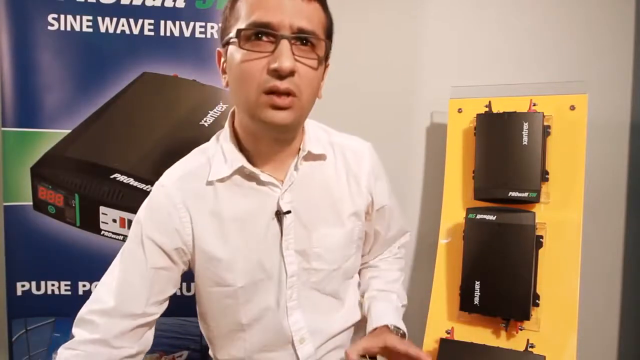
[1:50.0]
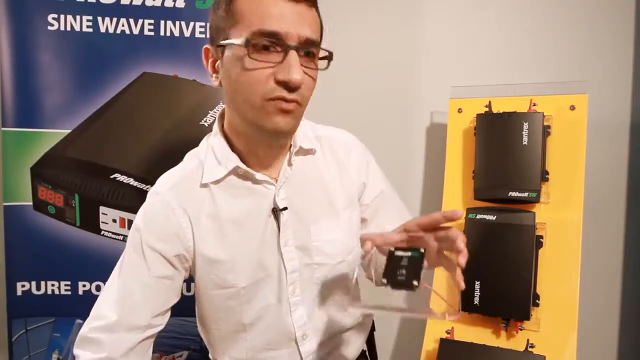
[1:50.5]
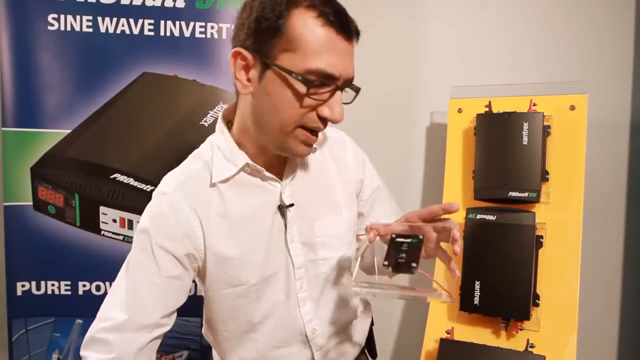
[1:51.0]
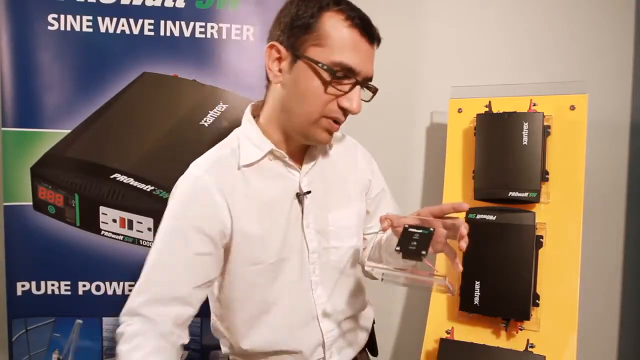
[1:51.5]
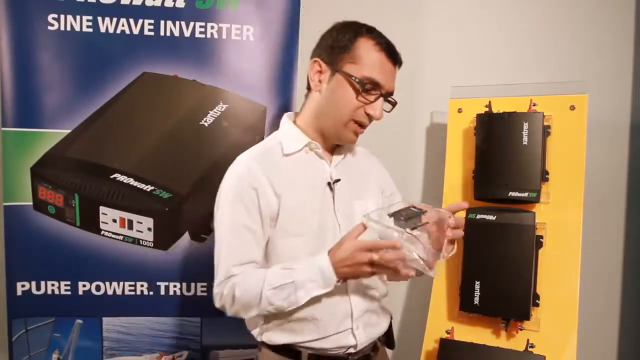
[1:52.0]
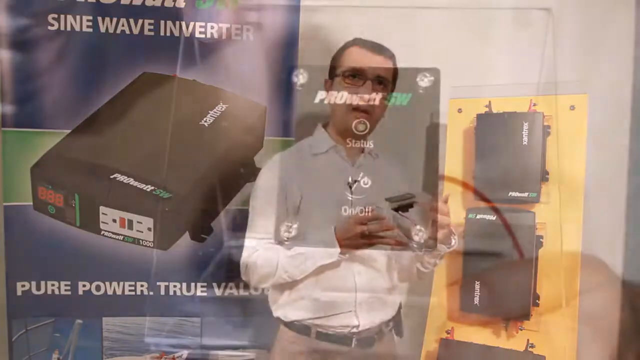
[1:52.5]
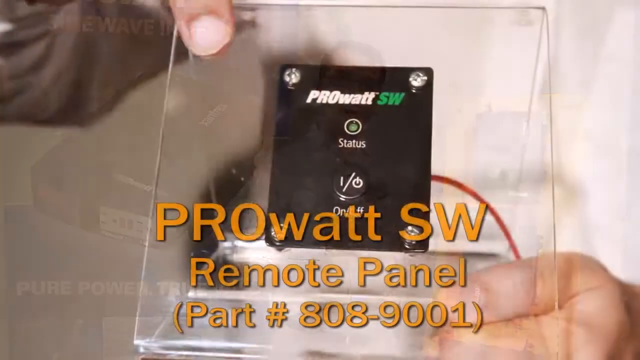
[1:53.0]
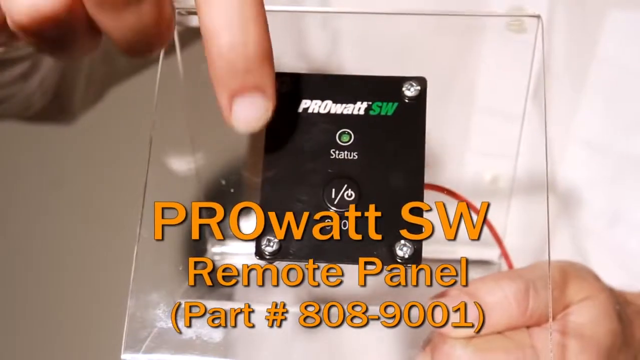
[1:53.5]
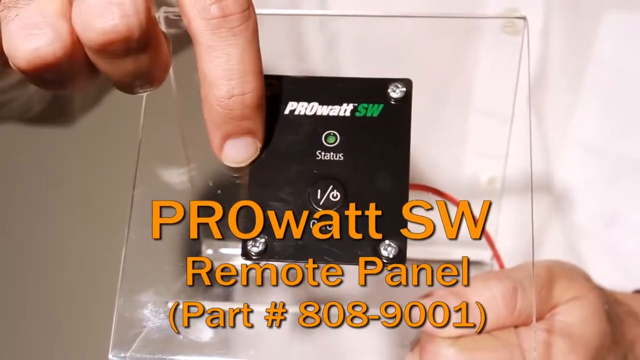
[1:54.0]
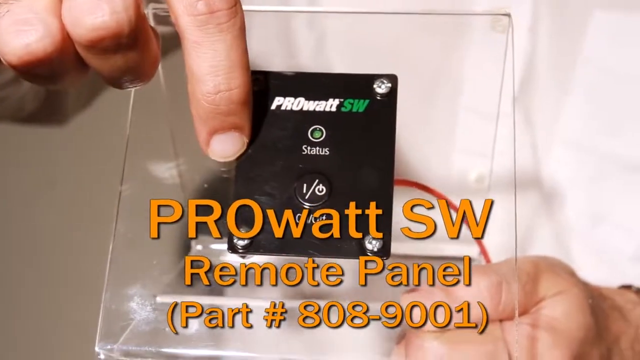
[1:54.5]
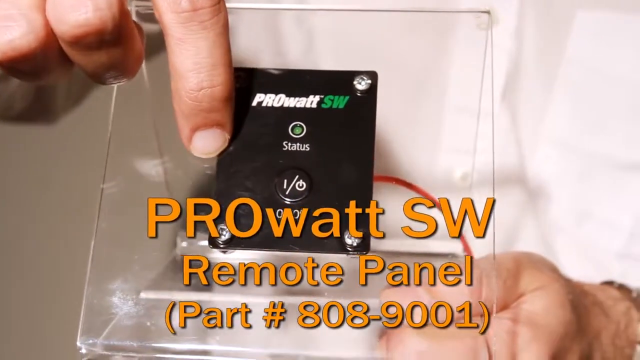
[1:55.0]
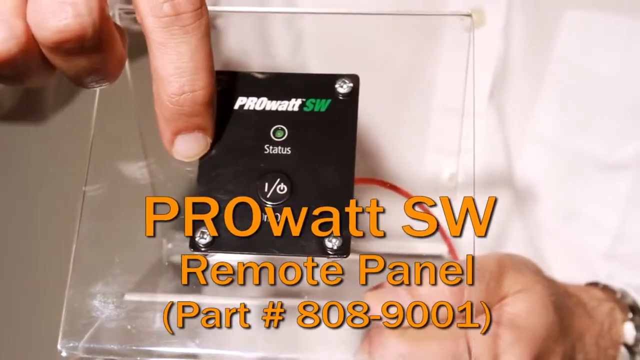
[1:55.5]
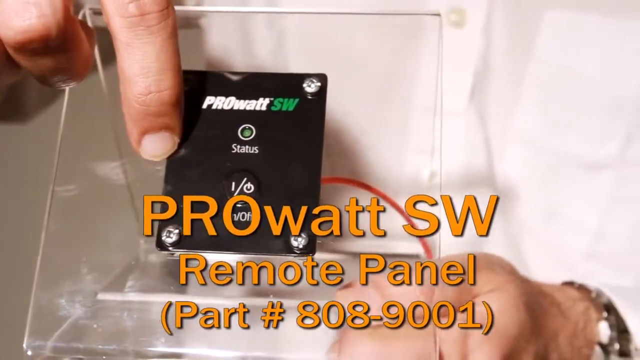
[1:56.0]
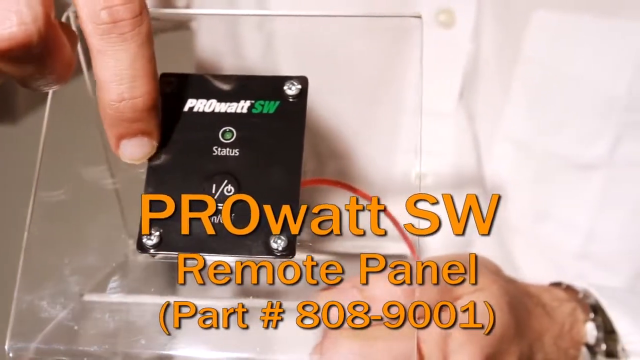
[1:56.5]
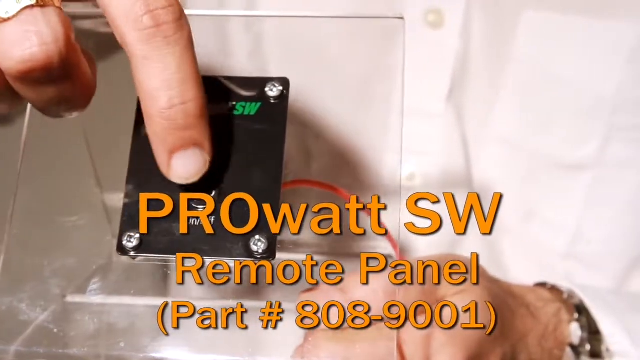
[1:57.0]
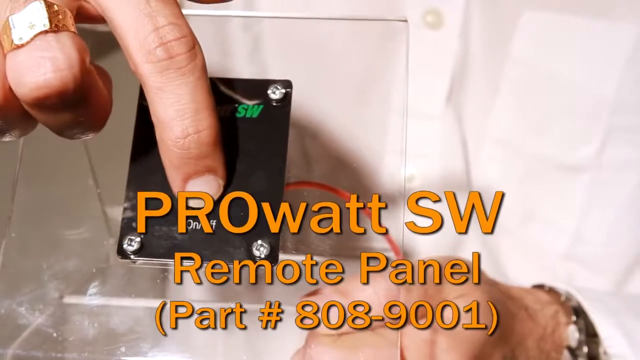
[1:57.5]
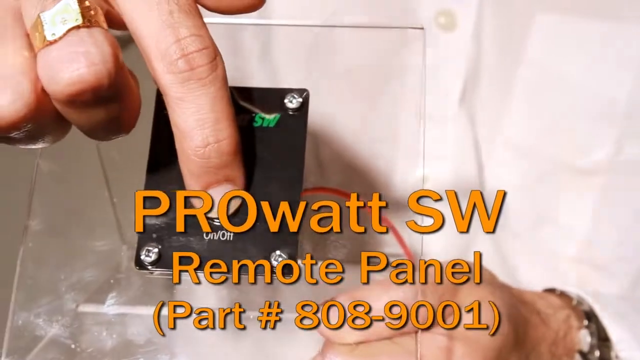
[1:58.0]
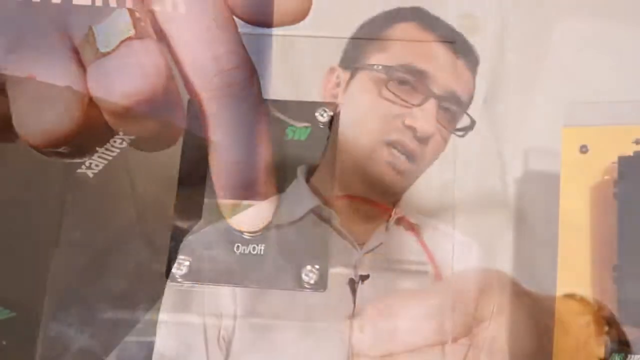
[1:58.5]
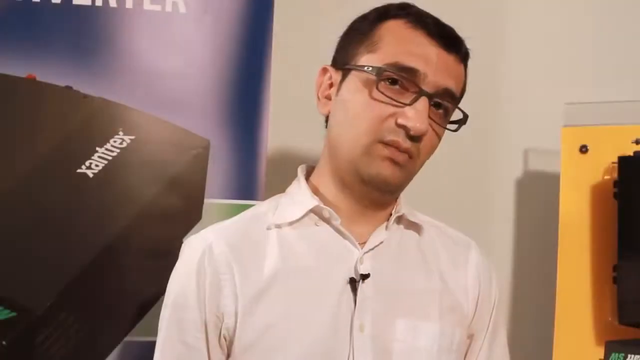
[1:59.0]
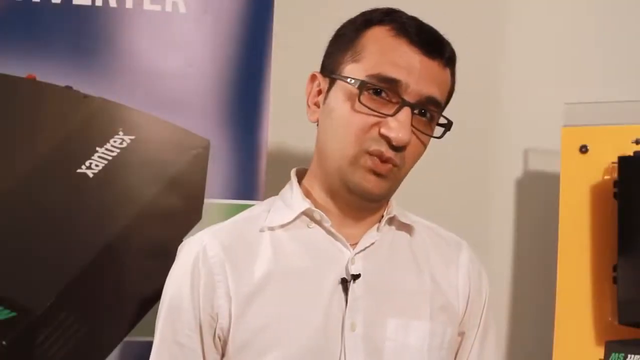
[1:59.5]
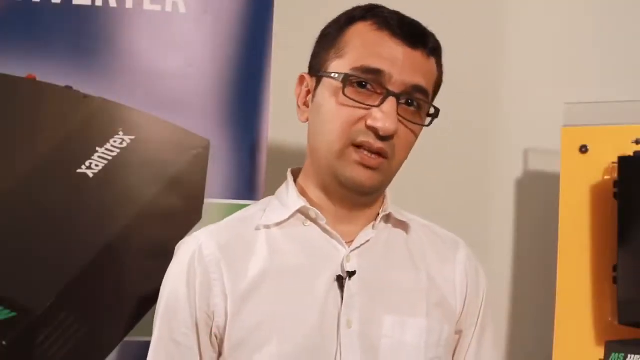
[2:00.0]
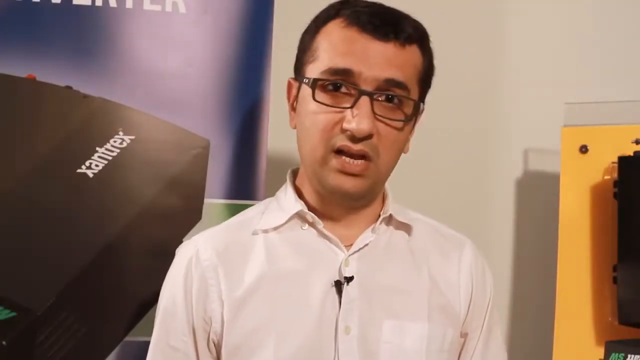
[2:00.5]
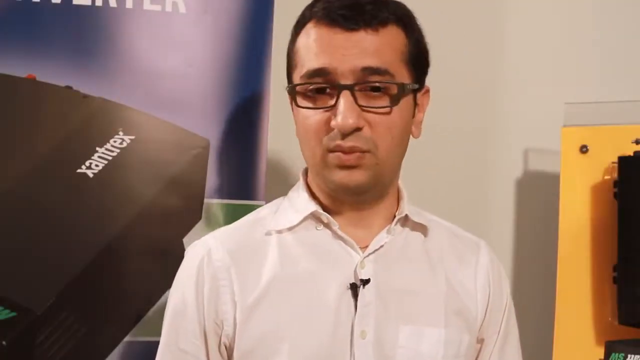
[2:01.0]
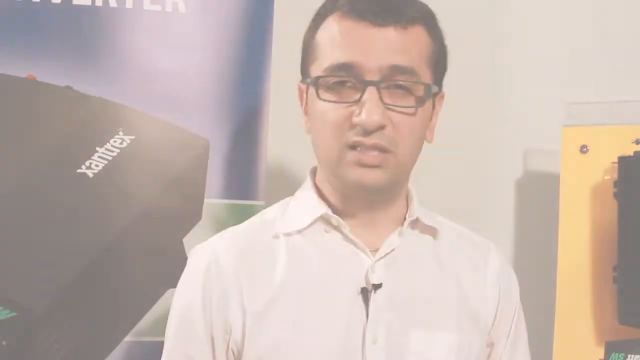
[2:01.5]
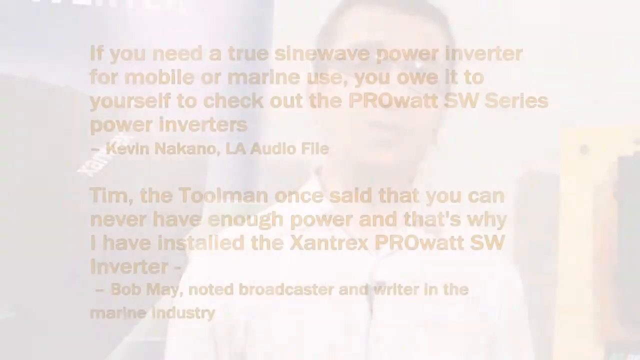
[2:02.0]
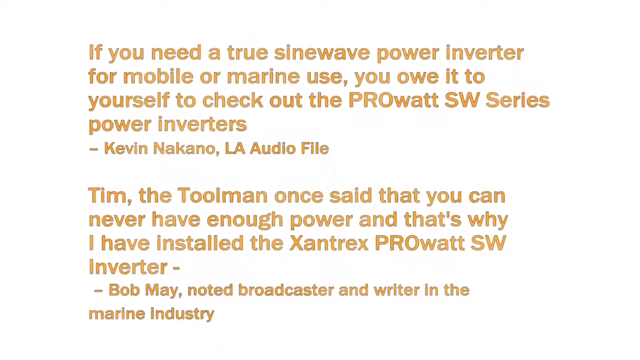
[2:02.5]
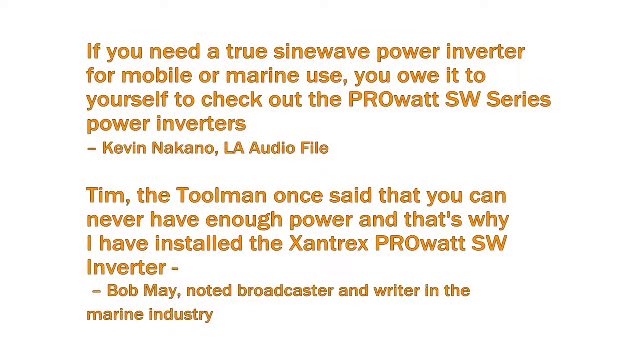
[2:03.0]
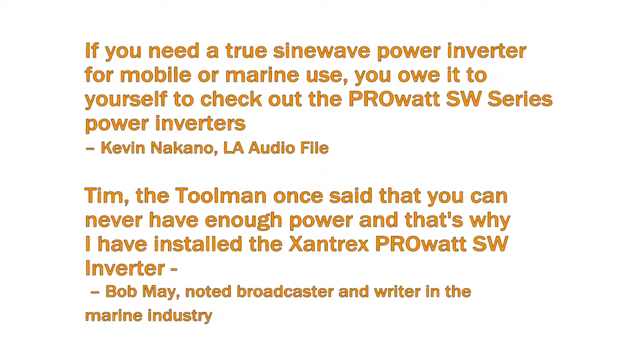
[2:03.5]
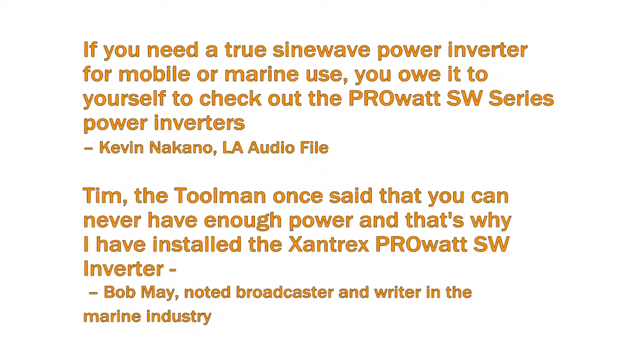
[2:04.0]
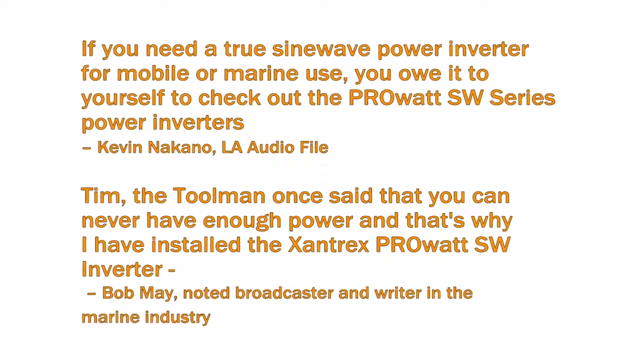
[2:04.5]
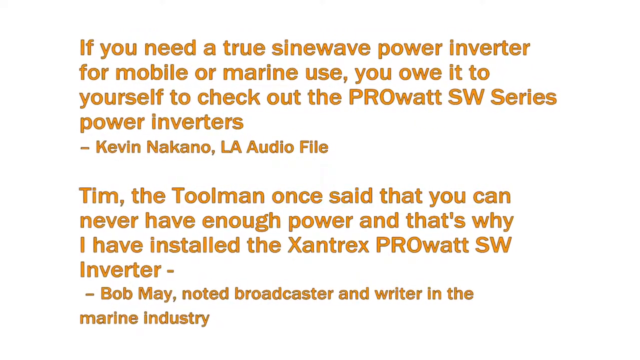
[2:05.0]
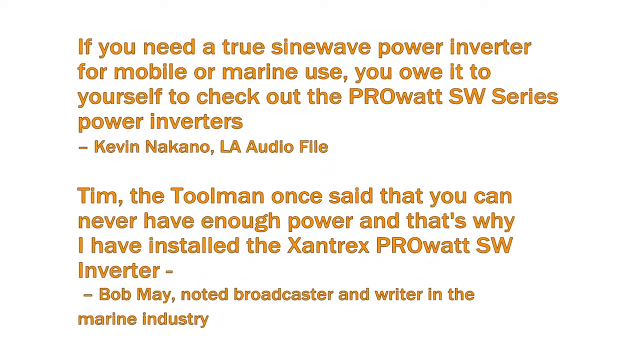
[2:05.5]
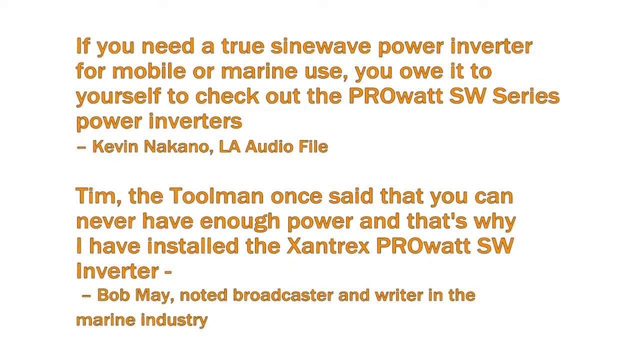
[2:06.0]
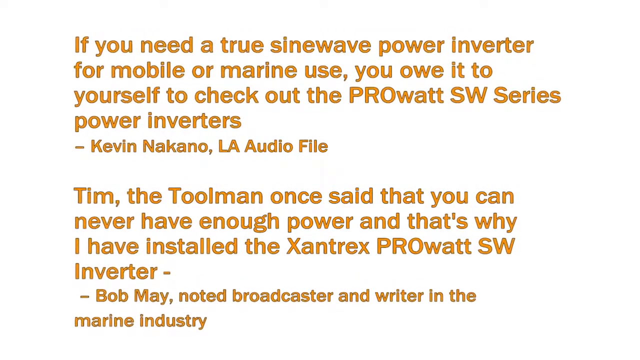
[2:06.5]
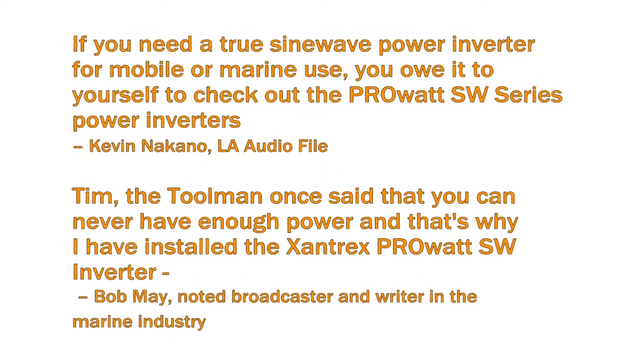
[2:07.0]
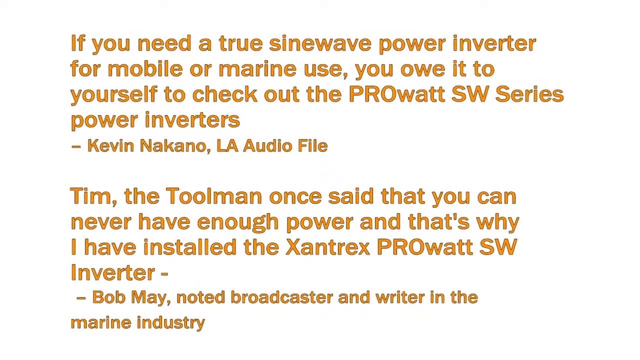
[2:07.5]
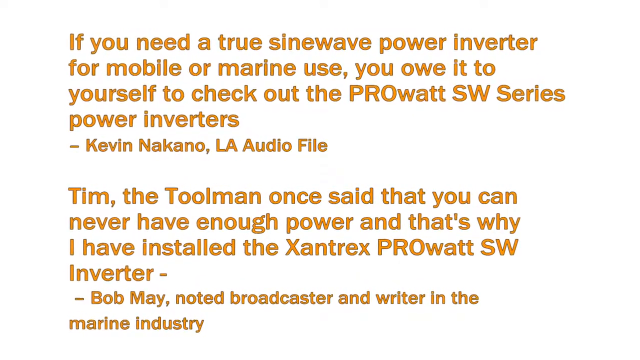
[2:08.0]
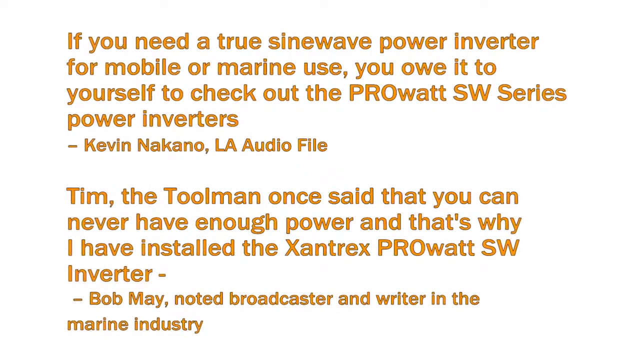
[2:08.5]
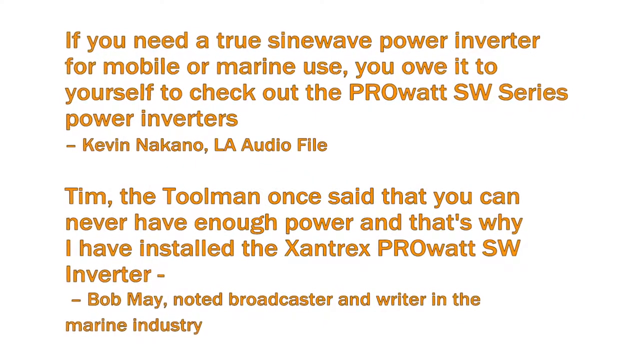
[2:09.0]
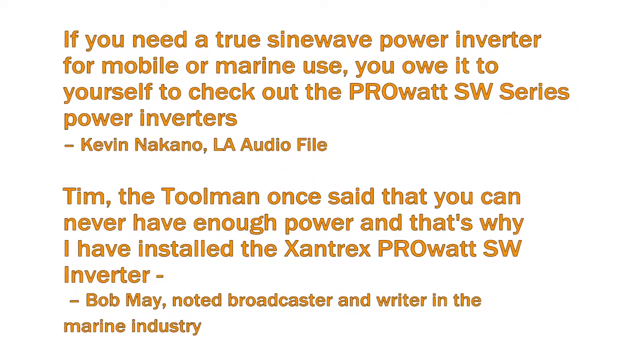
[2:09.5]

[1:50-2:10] A man wears a somewhat wrinkled button-up shirt that looks like it was taken out of a box, with a microphone attached. He wears rectangular glasses and has black hair. He stands in front of a poster and a board with several wave inverters attached to it. He picks up a model on a plastic triangular shape, looks at it while talking, and holds it up for the camera. Attached to the plastic is a piece with four screws bearing "pro watt" in white text and "sw" in green text, a status light, and an on/off power button. An orange overlay reads "pro watt sw remote panel part number 808-9001." He points to it with the index finger of his right hand while holding it with his left, and he wears a gold ring on his middle finger. Text then appears reading "if you need a true sine wave power inverter for mobile or marine use you owe it to yourself to check out the pro watt sw series power inverters," attributed to Kevin Nakano, and below that is a promotion of the product from Bob May, a noted broadcaster.